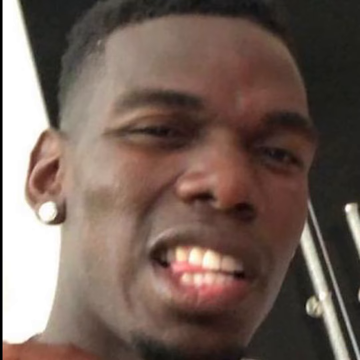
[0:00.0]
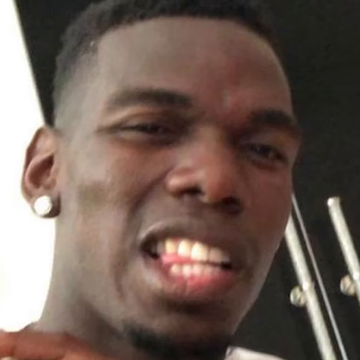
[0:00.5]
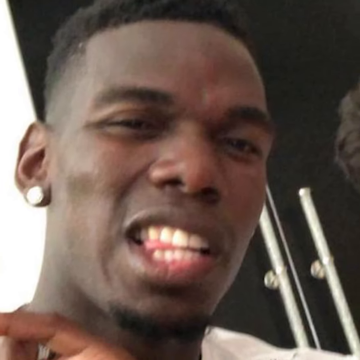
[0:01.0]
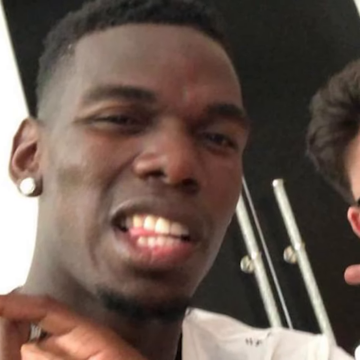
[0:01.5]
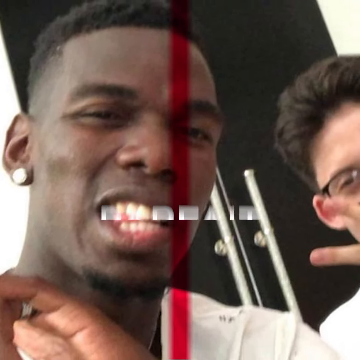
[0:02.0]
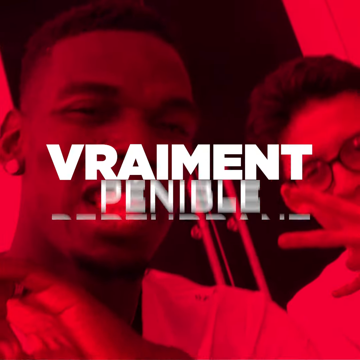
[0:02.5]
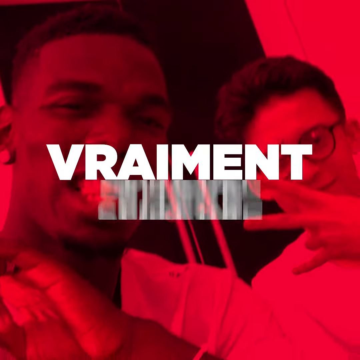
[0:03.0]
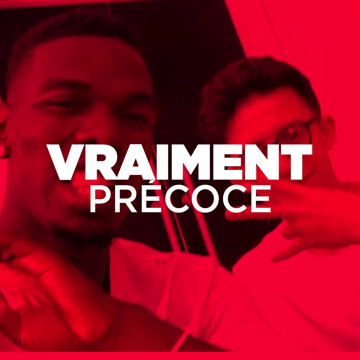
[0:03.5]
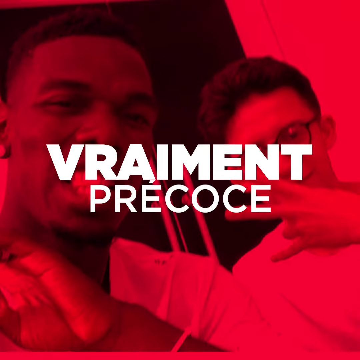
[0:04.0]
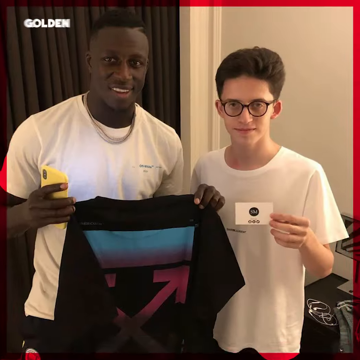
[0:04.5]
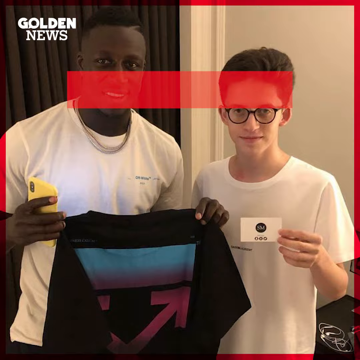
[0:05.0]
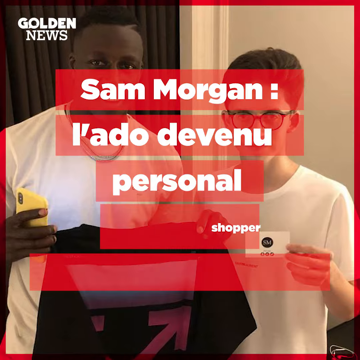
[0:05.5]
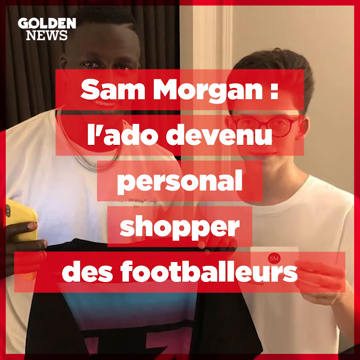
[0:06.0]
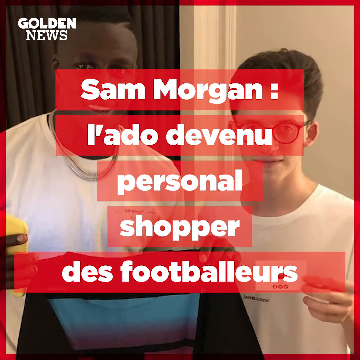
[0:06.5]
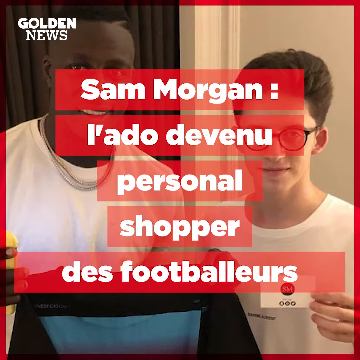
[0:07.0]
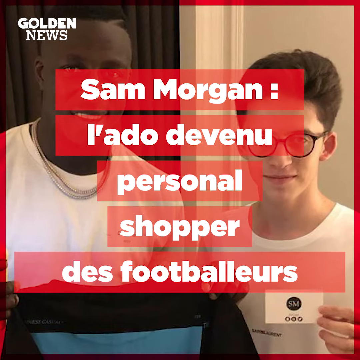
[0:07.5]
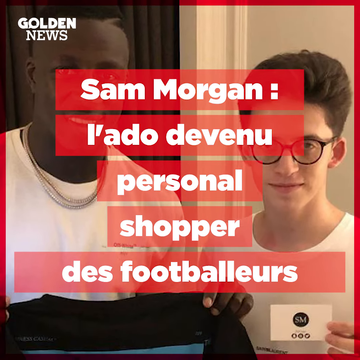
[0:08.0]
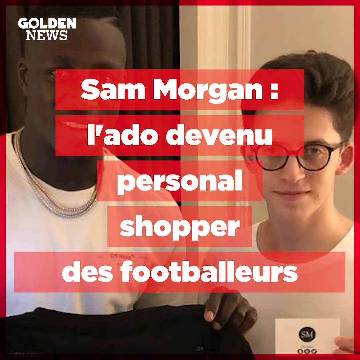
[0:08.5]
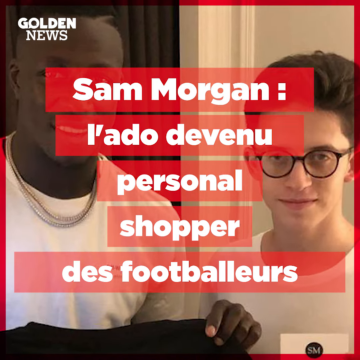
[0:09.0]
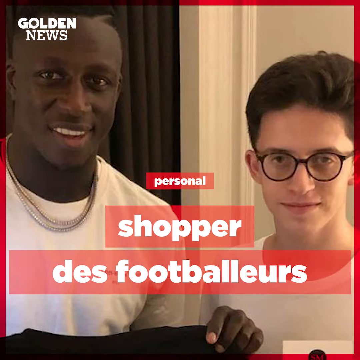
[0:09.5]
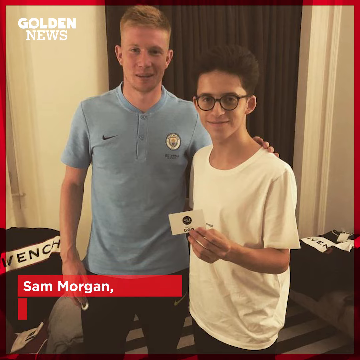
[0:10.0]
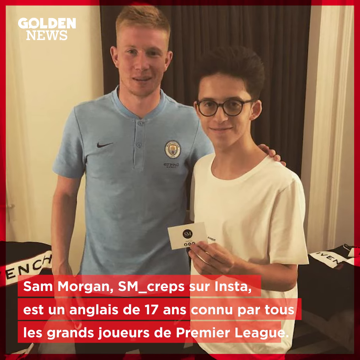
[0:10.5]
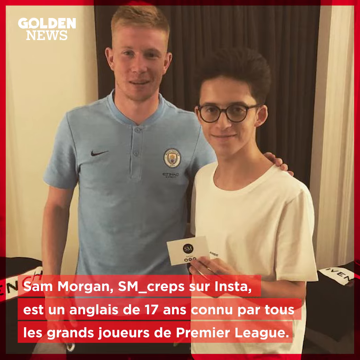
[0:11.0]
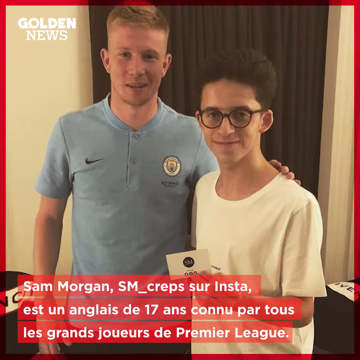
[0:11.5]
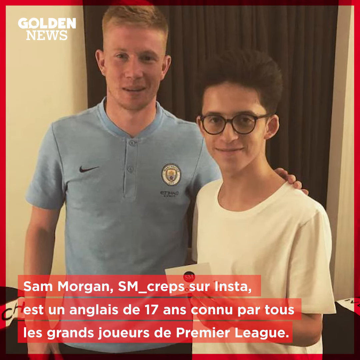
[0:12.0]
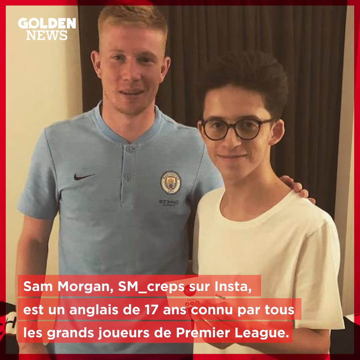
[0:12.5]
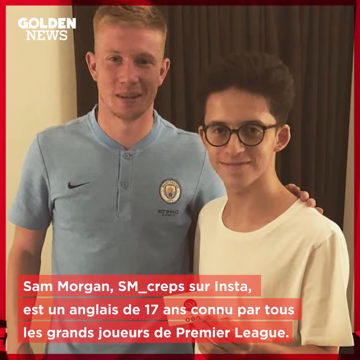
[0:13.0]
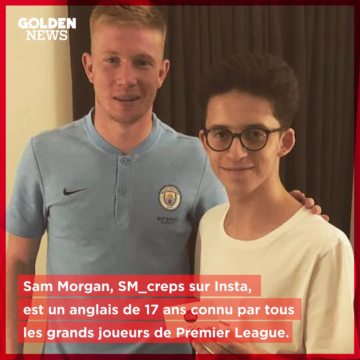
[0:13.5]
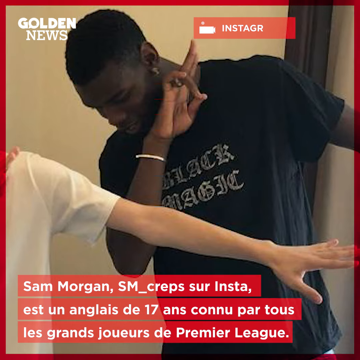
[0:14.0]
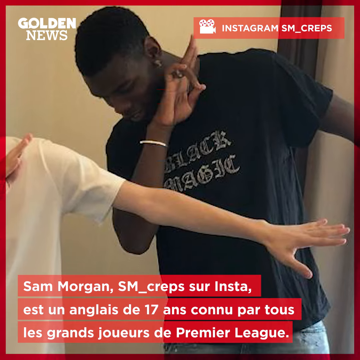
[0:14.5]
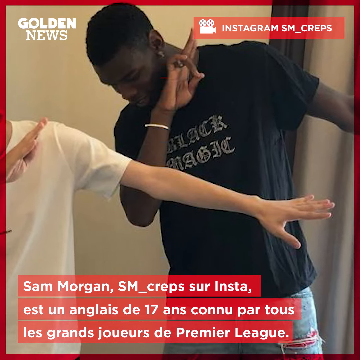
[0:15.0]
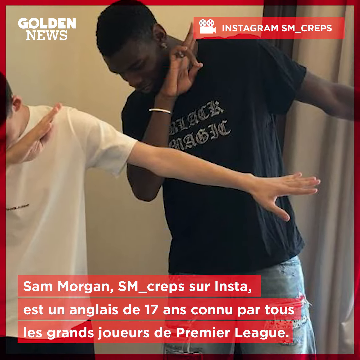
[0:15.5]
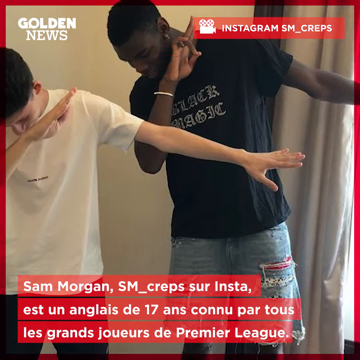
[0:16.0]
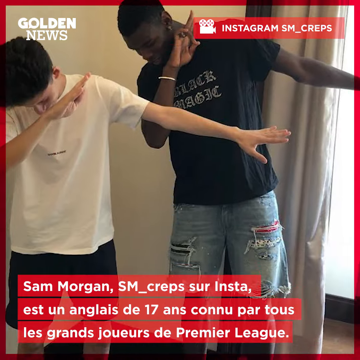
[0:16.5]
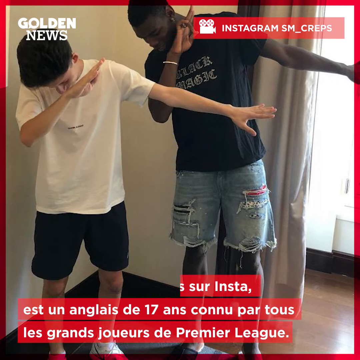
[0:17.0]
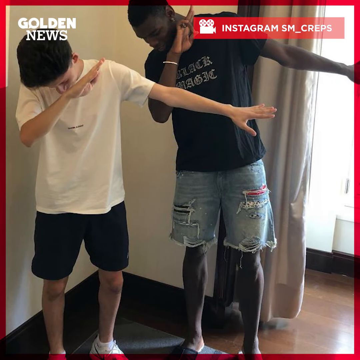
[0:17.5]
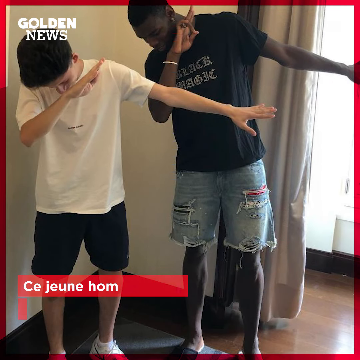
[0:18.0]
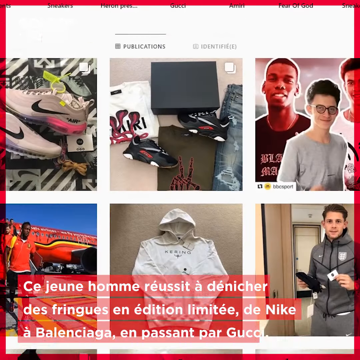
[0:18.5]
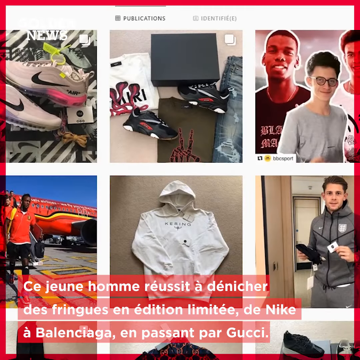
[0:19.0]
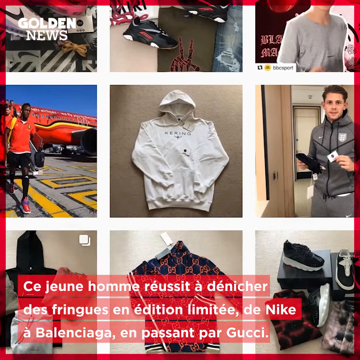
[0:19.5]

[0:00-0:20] An image of a black man slowly zooms out to reveal a white man standing next to him, holding up a hand sign. The white man has circular black-framed glasses and thick brown hair that is short at the top of his head; the black man has very short, neatly cut black hair. As the image zooms out, a large block of white text is pasted over it, apparently the name of an advertisement or some type of company, in a foreign language that looks like French. A transition shows a different black man and the same white man with the round black-framed glasses standing next to each other. Both wear white t-shirts; the black man holds up a black shirt, and the white man holds up what looks like a white business card with a black logo in the middle. In a red text box, large blocks of white text say something about a personal shopper for footballers and give the man's name, Sam Morgan, so the white man appears to be Sam Morgan, a personal shopper for footballers. Another image shows what appears to be a footballer in a light blue Manchester City uniform standing next to the personal shopper, and the image zooms in on them. It then cuts to a different image of the original black man and the white man standing next to each other doing the dab.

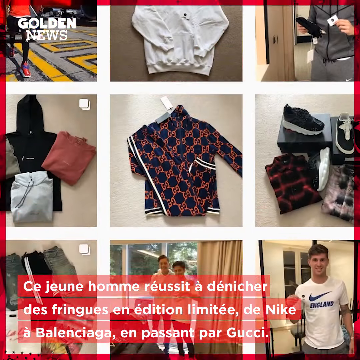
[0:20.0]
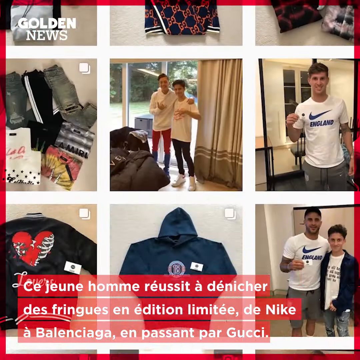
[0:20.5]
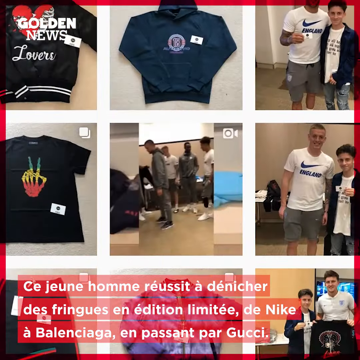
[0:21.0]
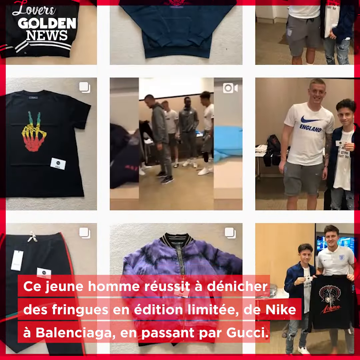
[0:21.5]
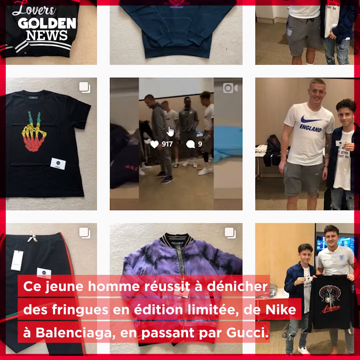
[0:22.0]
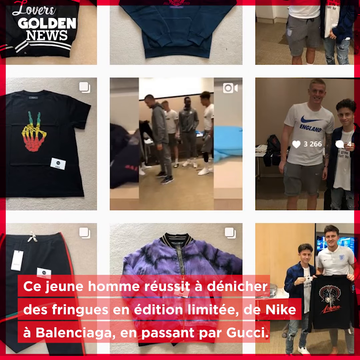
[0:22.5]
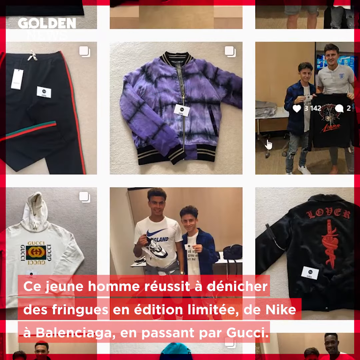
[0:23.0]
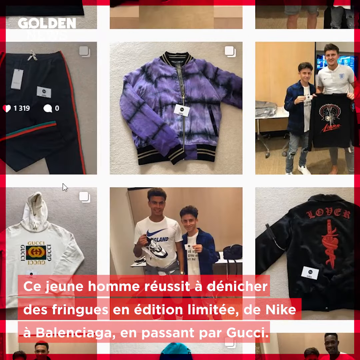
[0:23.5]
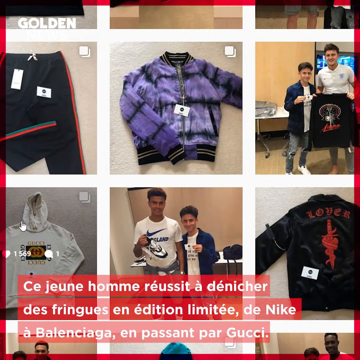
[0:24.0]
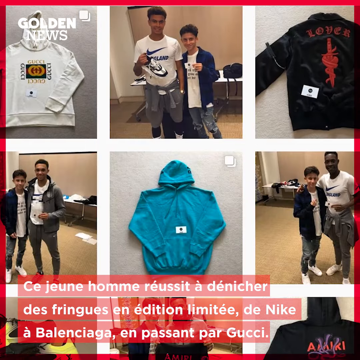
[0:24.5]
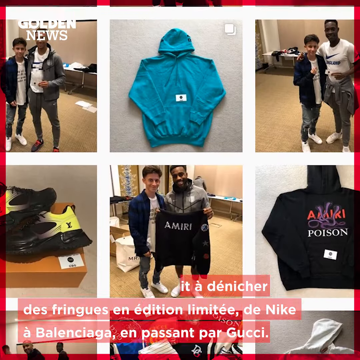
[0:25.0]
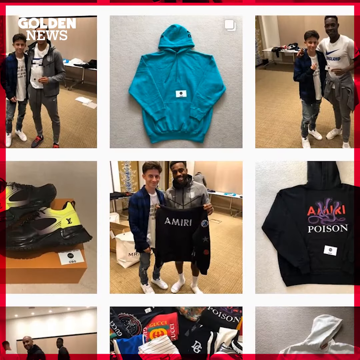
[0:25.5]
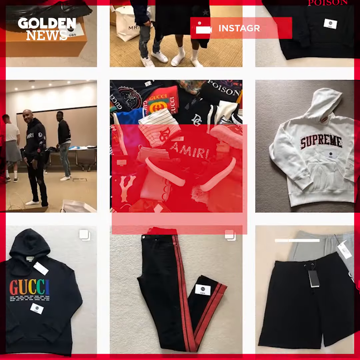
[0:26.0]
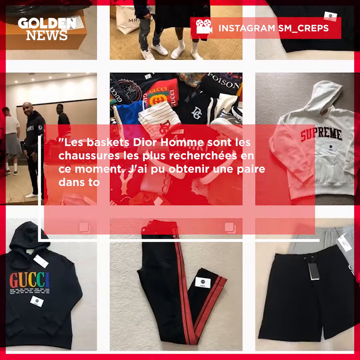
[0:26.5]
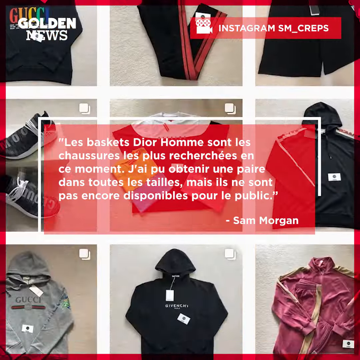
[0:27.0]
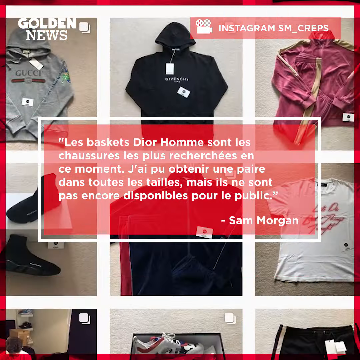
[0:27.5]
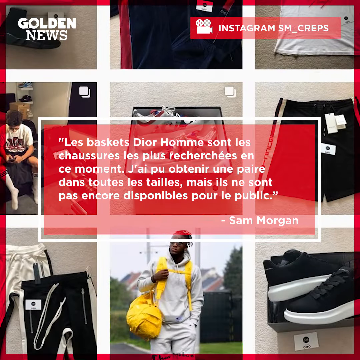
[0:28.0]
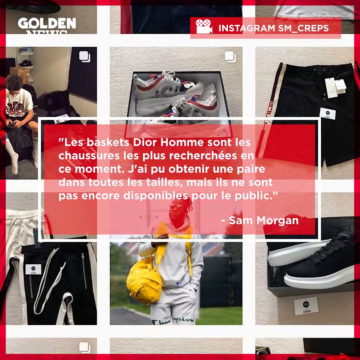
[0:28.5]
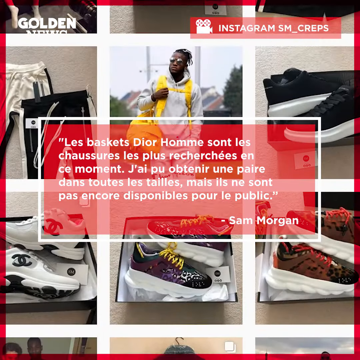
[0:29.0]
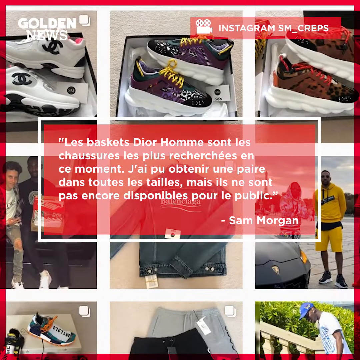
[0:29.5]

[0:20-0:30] A block of what looks like Instagram posts appears, with three square images in each row, and the video scrolls down through various images of jackets, pants, and people. Each image of people includes a shorter man standing next to what looks like a professional footballer. As the scrolling continues, red text boxes contain white text in French. The clothing in the images appears to be luxury designer clothing, and the images of the two men standing together appear to show the personal shopper Sam Morgan, who buys things for professional footballers. A quote by Sam Morgan in French appears at the end.